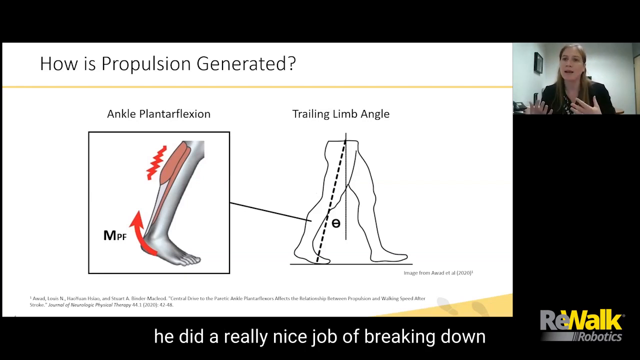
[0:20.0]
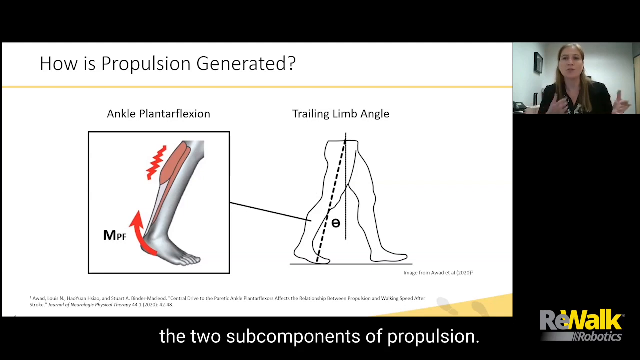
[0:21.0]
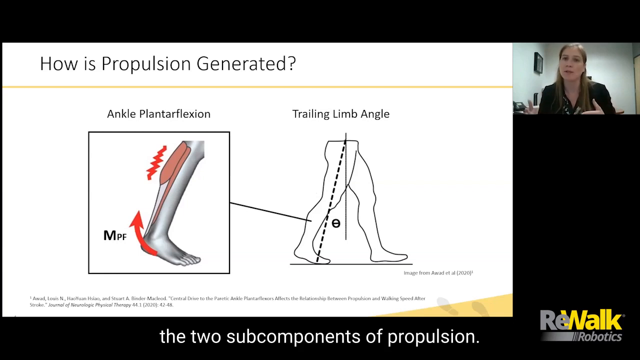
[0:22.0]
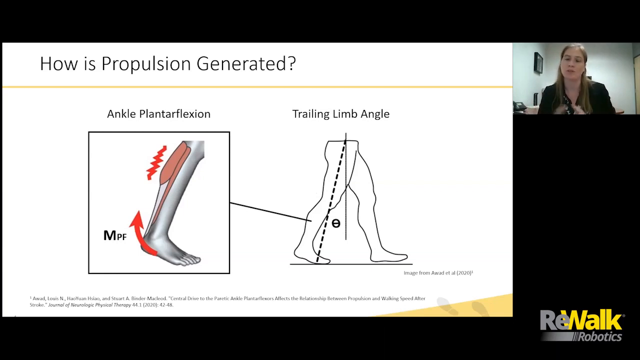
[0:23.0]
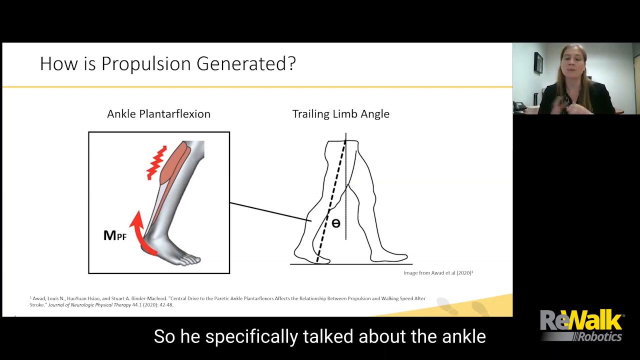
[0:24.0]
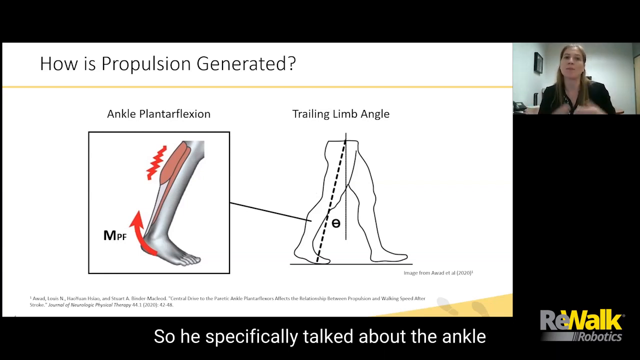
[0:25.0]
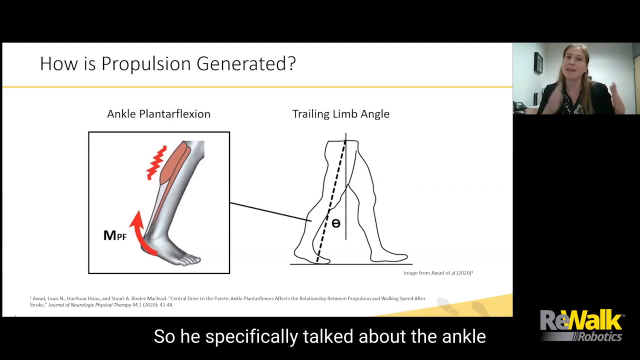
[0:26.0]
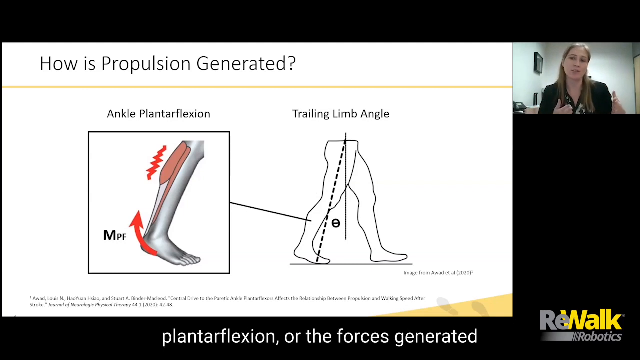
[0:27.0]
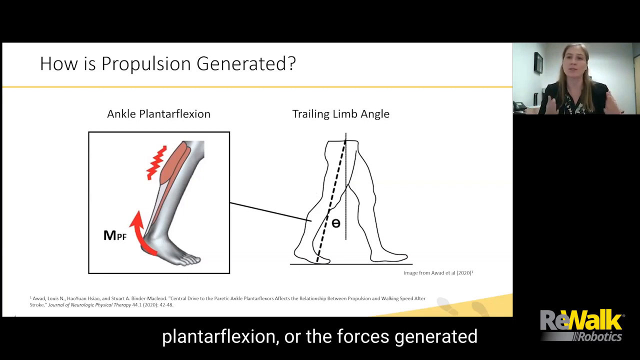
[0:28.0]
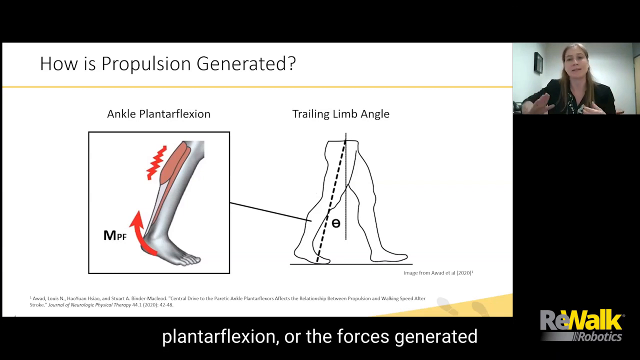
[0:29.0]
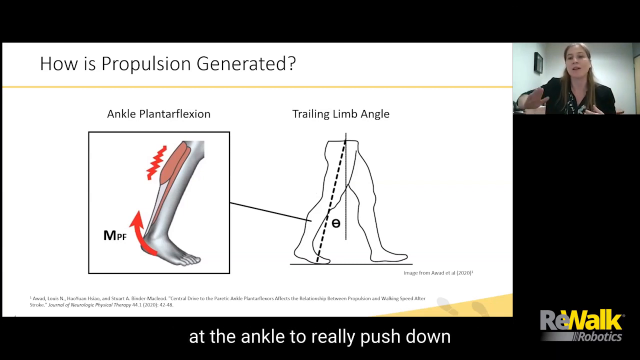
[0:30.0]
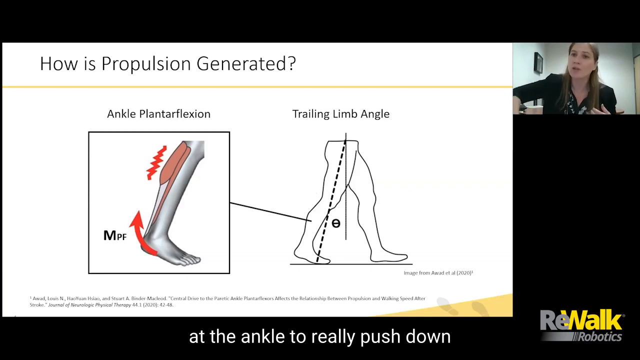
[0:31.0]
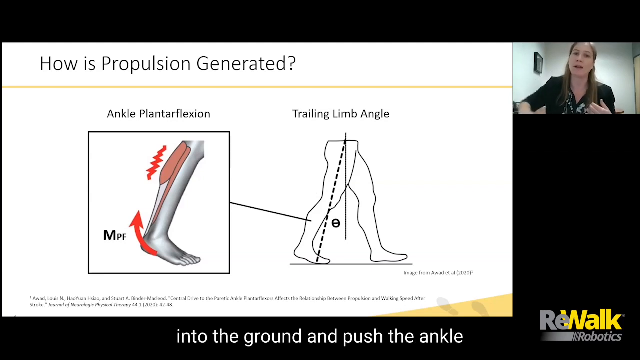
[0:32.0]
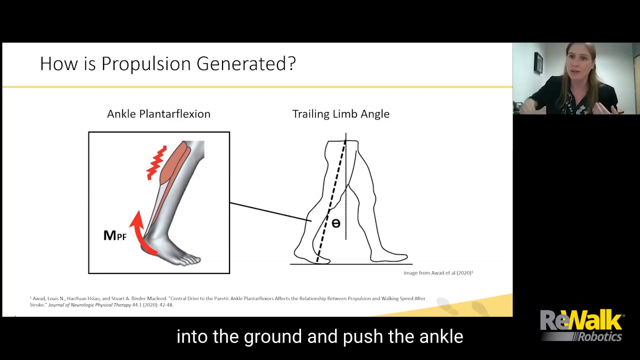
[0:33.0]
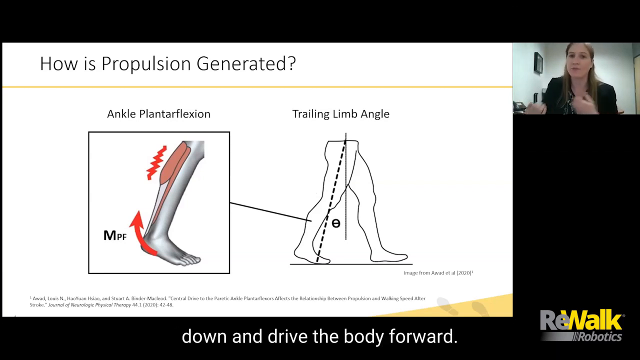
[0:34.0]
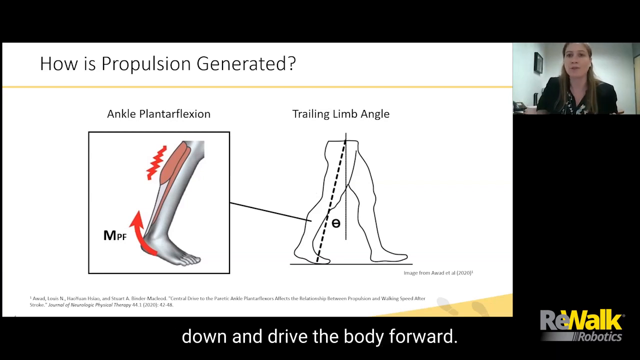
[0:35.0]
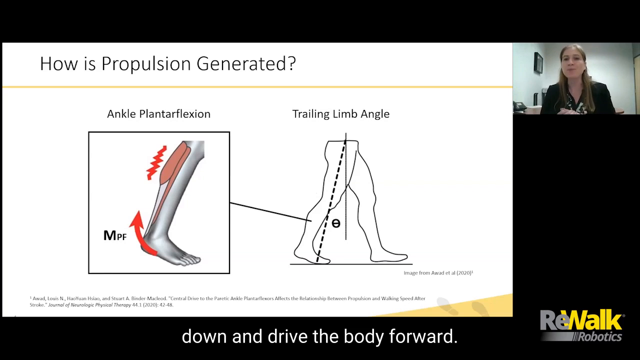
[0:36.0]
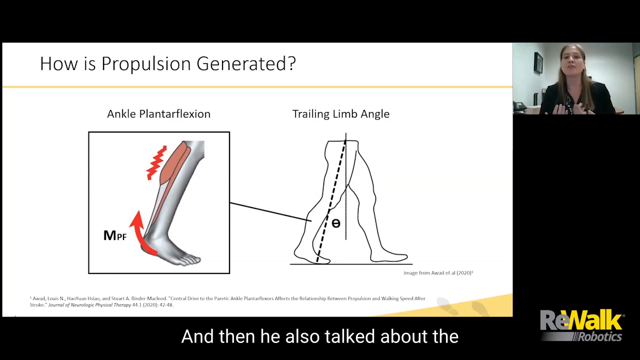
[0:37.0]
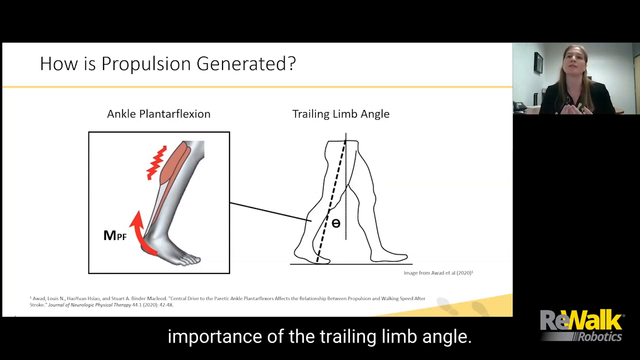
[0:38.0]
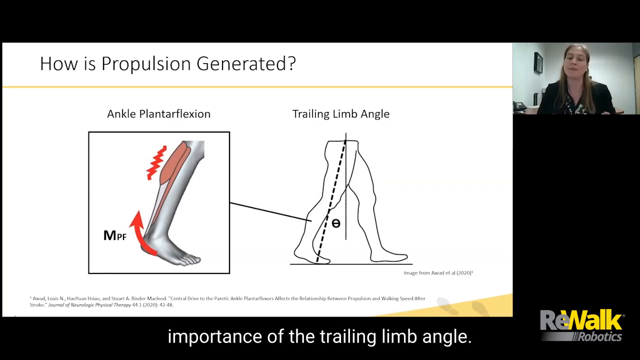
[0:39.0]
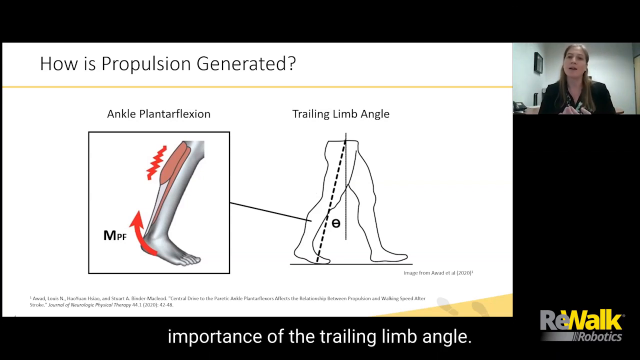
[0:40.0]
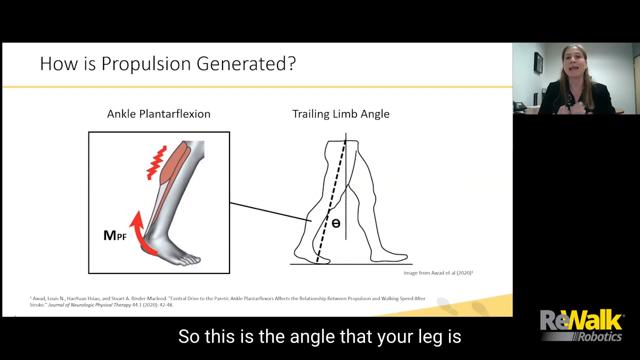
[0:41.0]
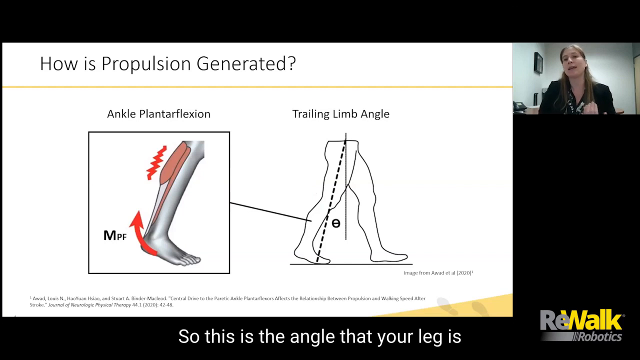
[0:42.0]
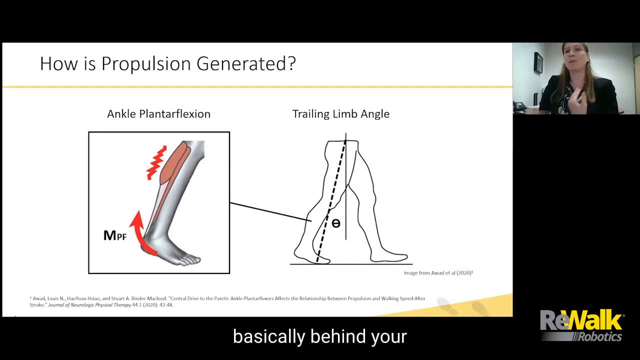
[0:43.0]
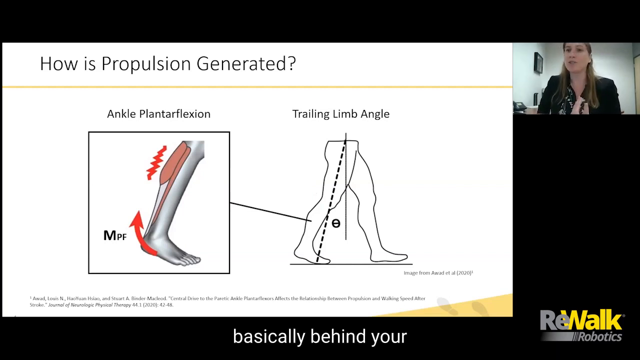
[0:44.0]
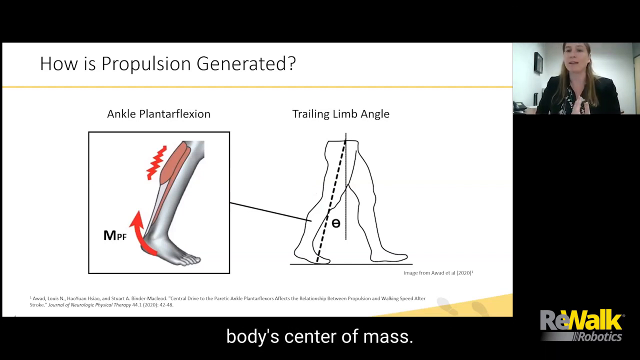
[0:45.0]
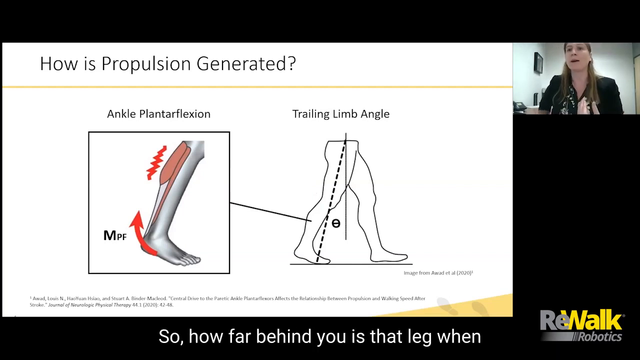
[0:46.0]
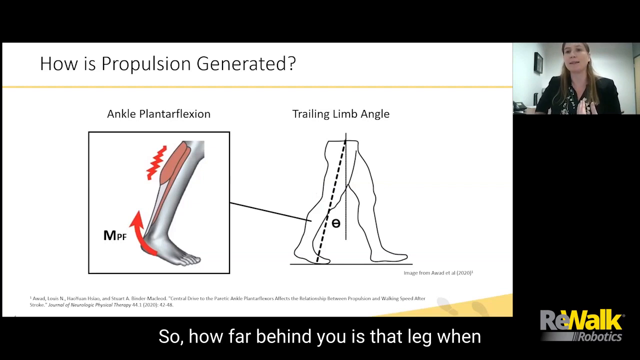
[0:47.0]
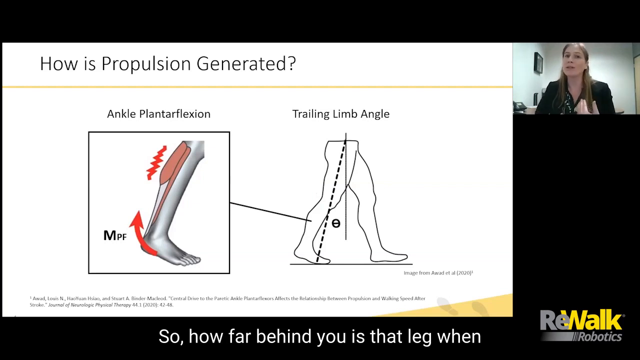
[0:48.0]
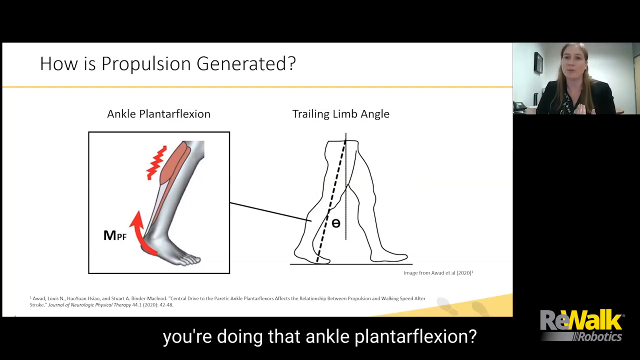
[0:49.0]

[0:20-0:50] The same two images illustrating ankle plantar flexion remain on screen, with an angle shown on the right side of the picture. A woman in the top right is talking, and the presentation is credited to Rewalk Robotics. The screen then changes to show her standing up with straight legs in a blue uniform.